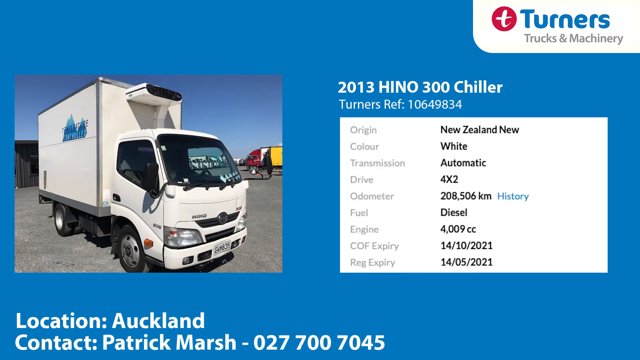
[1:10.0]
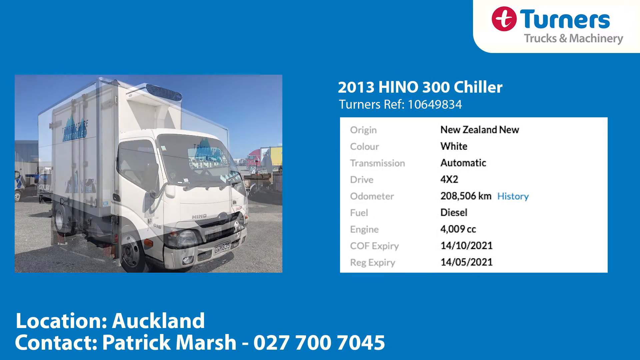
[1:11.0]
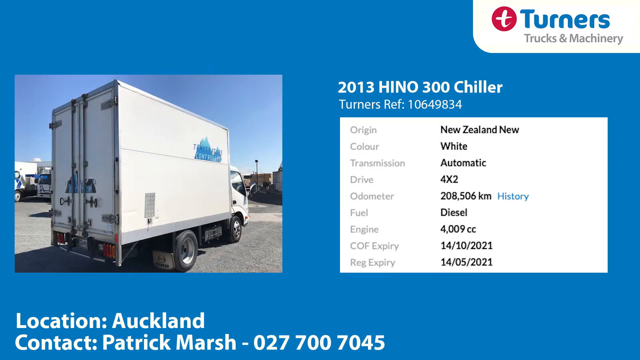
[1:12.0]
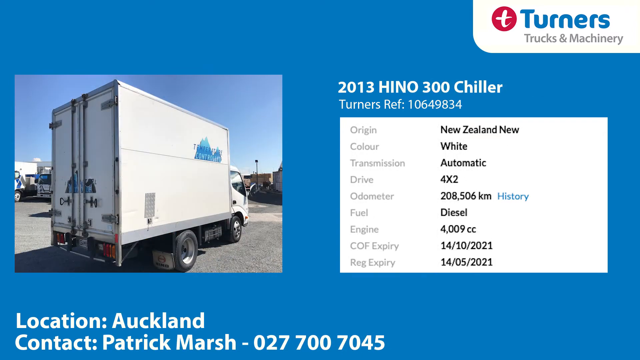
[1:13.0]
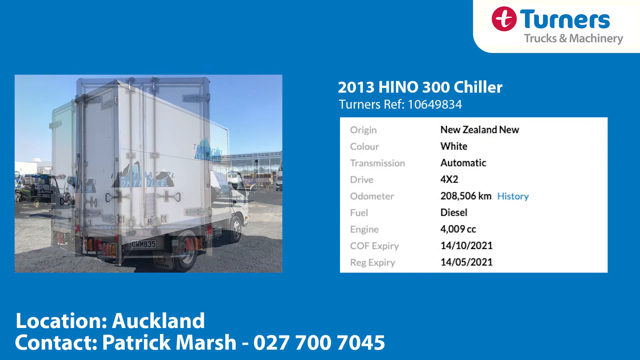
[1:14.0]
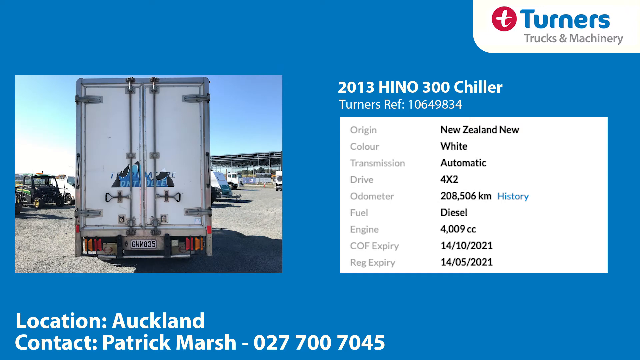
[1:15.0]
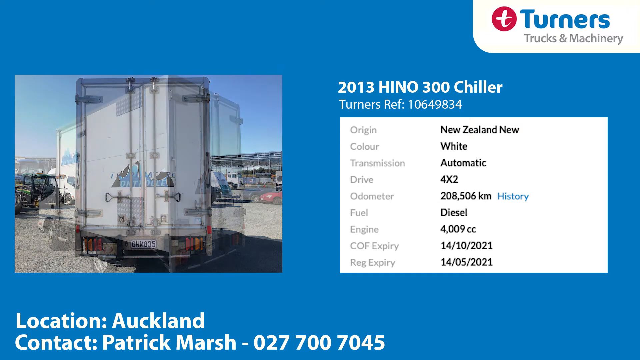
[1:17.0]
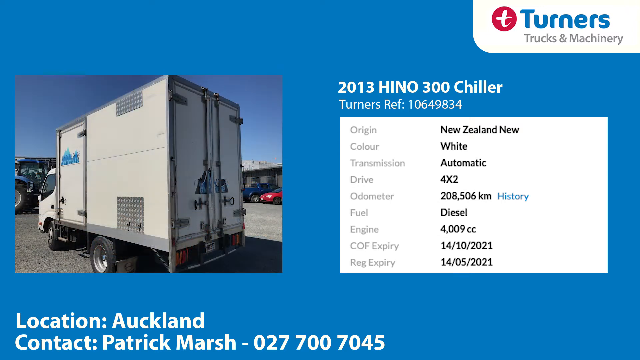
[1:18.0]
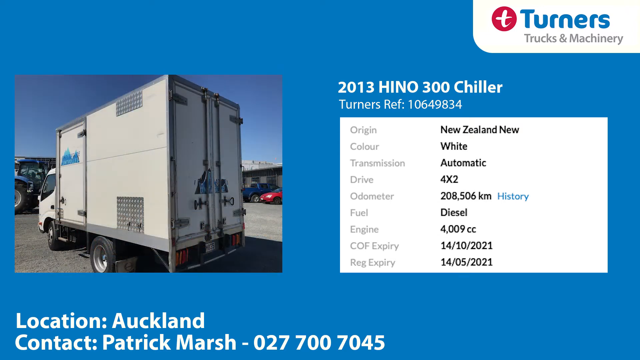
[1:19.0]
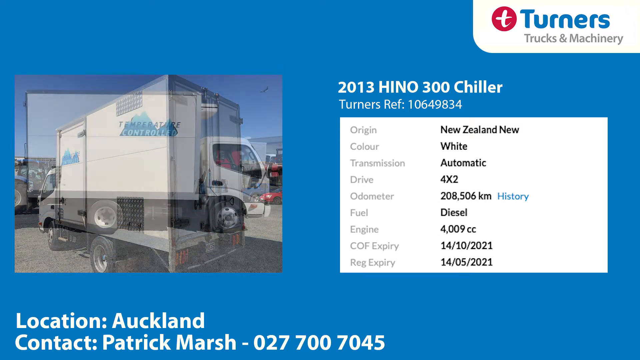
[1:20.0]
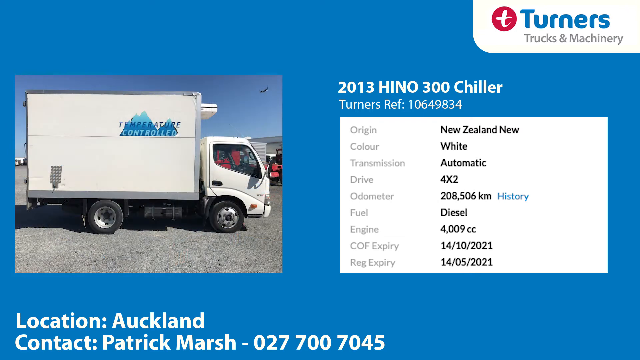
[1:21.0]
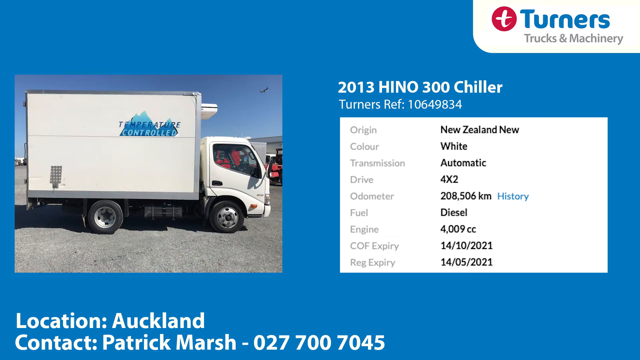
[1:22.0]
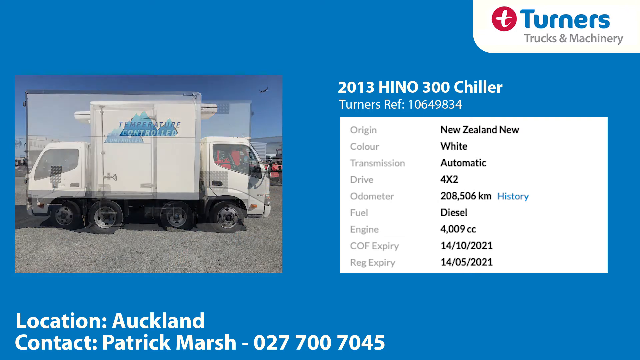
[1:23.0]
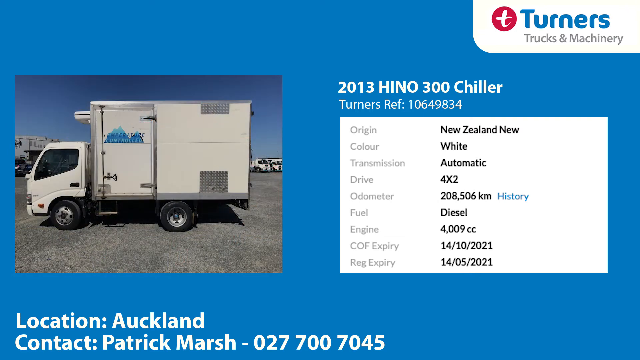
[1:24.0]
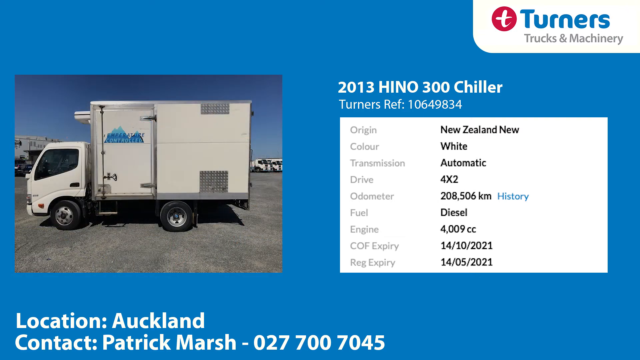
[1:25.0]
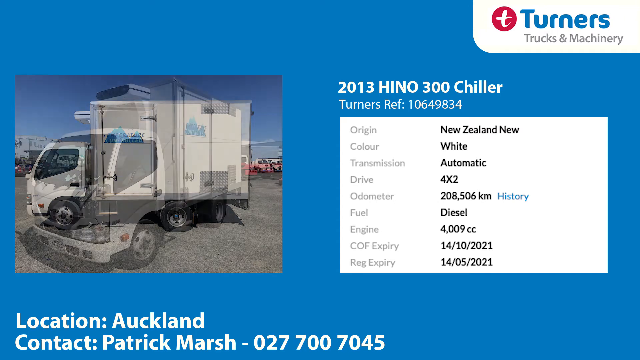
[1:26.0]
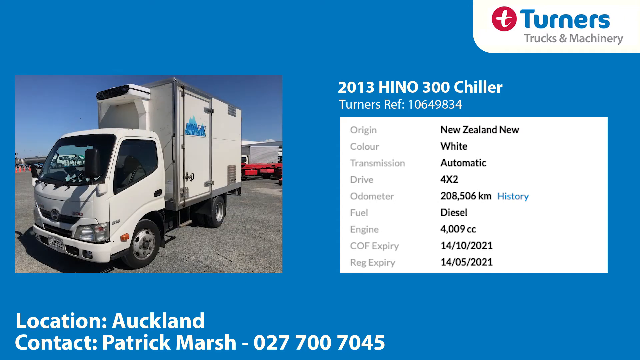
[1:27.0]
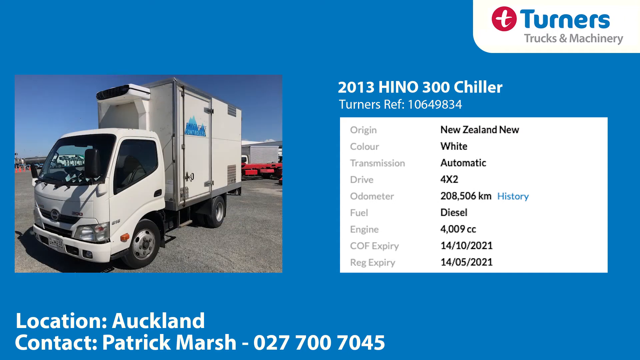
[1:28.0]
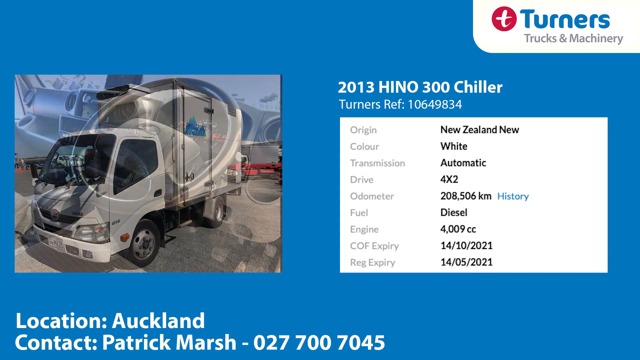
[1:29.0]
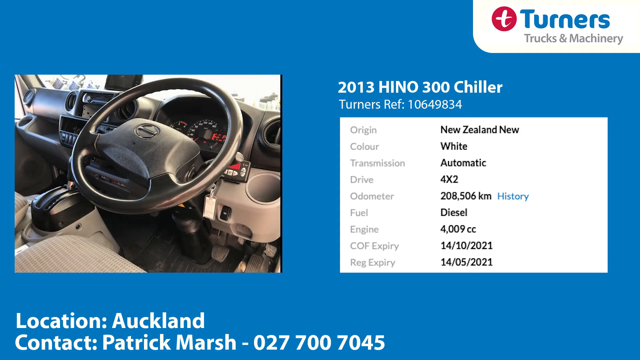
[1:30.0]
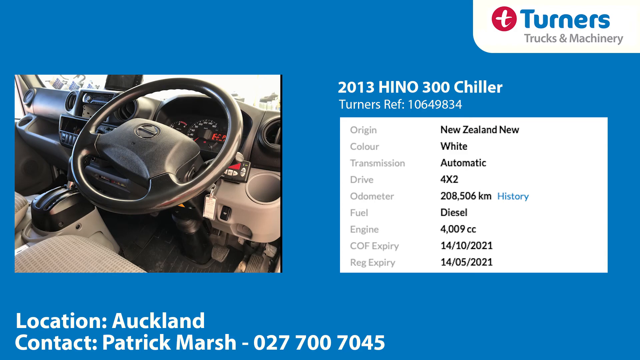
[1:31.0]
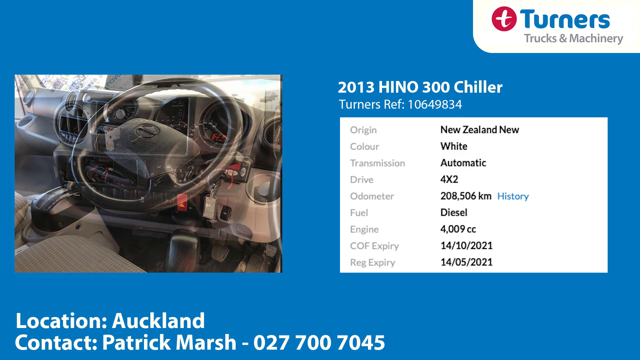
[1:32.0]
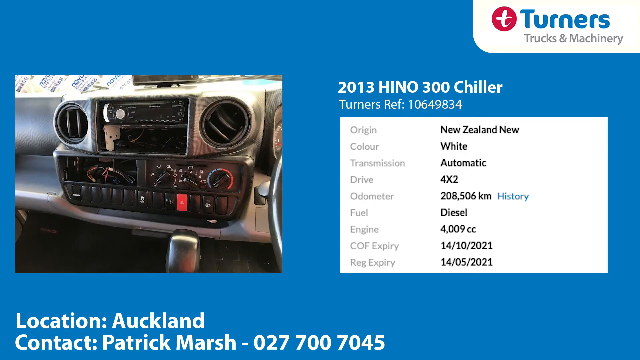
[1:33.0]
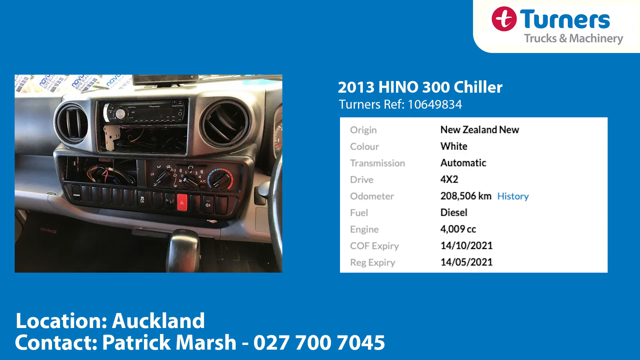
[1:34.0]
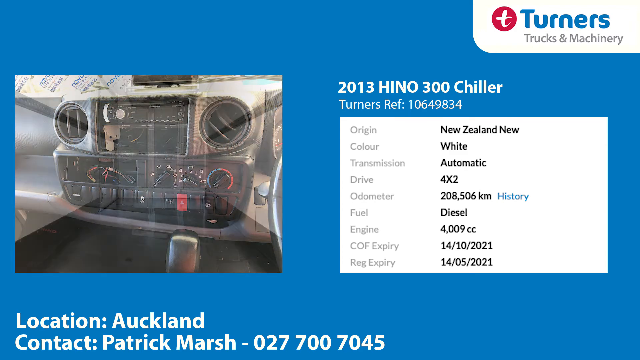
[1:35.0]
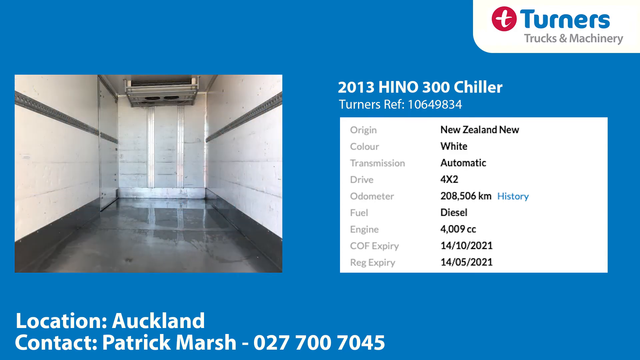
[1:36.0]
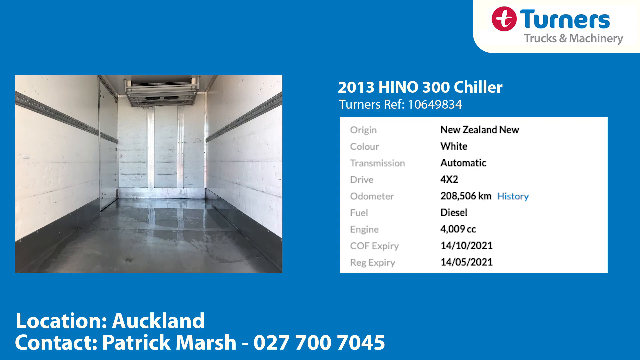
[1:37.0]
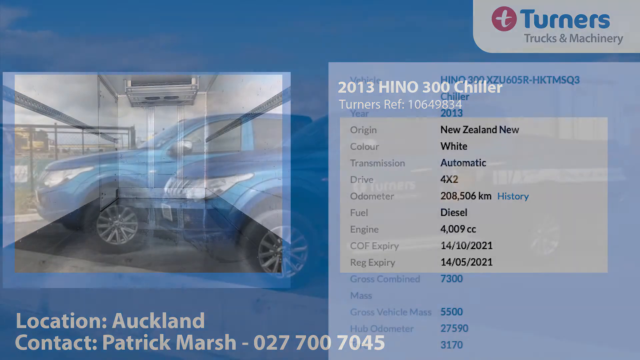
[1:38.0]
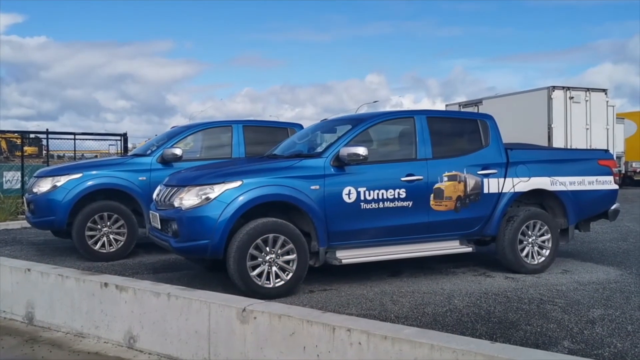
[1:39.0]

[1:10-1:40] The next listing is a 2013 Hino 300 Chiller with a reference number for Turners. Its origin is New Zealand; it is new, coloured white, automatic and diesel powered, quite small, with an engine size of 4000cc. Images show inside the cabin, the dashboard, the steering wheel, and inside the trailer, which is rather large. It is available in Auckland, the contact name is Patrick Marsh, and his number is given as 027-700-7045. The section finishes with a view of two blue trucks with the Turners logo on them.